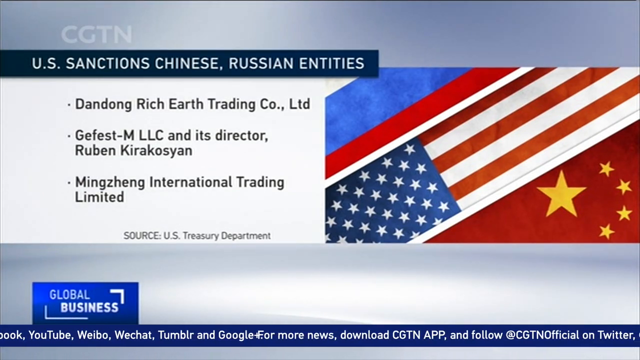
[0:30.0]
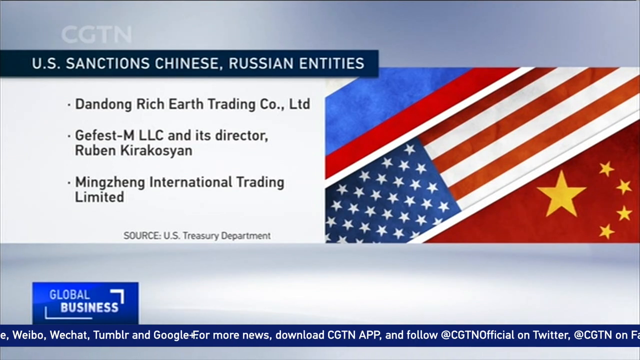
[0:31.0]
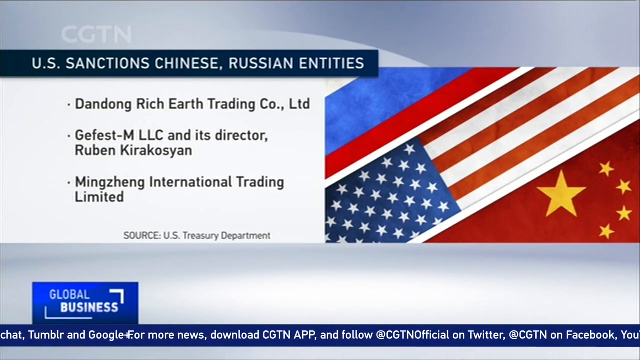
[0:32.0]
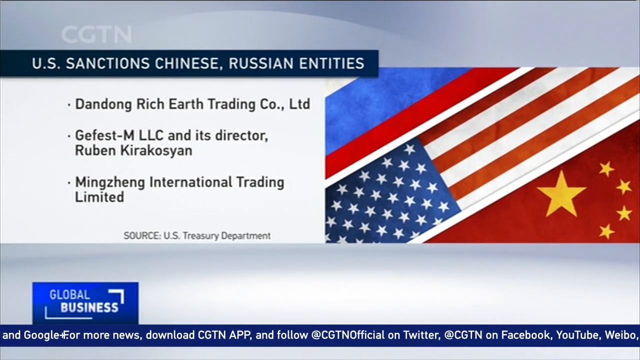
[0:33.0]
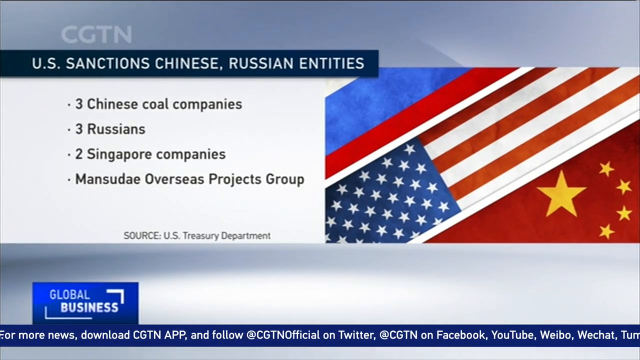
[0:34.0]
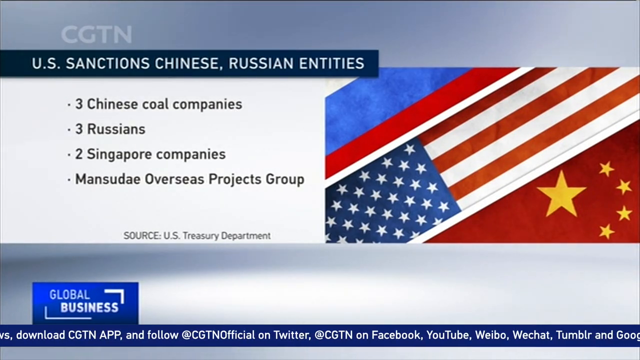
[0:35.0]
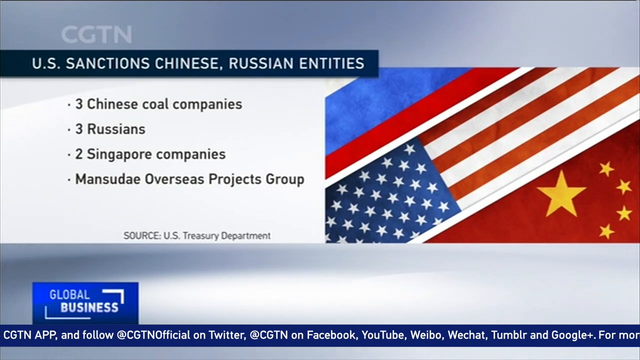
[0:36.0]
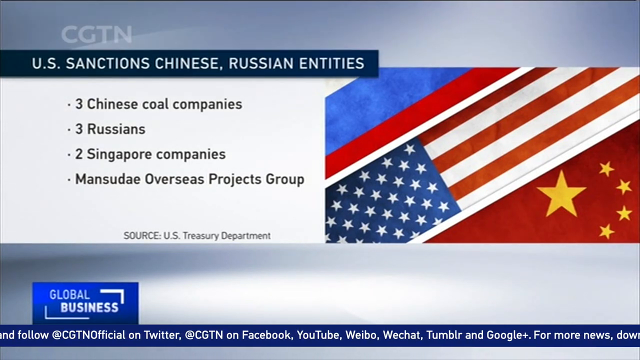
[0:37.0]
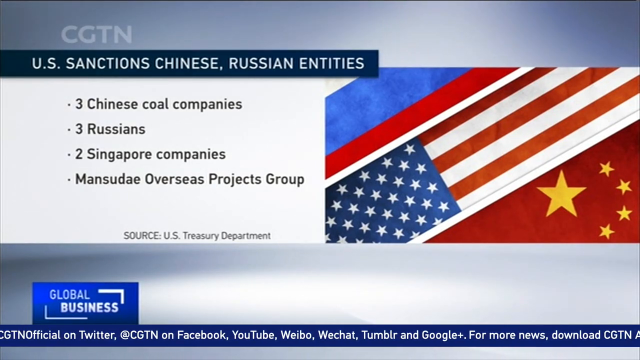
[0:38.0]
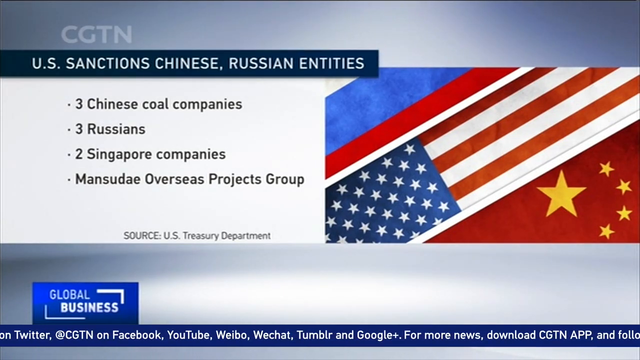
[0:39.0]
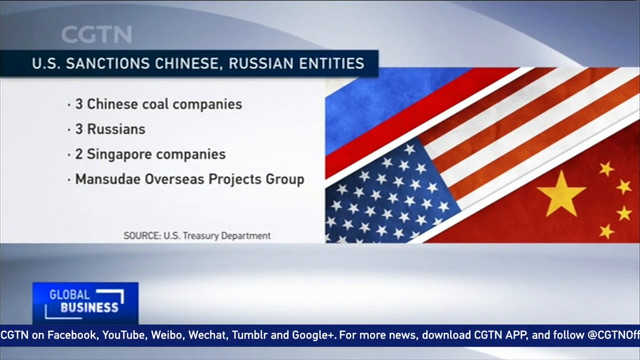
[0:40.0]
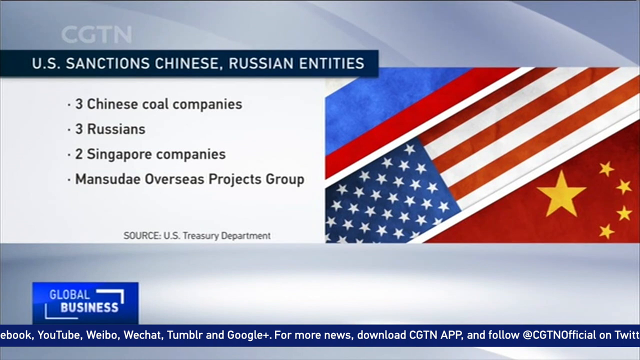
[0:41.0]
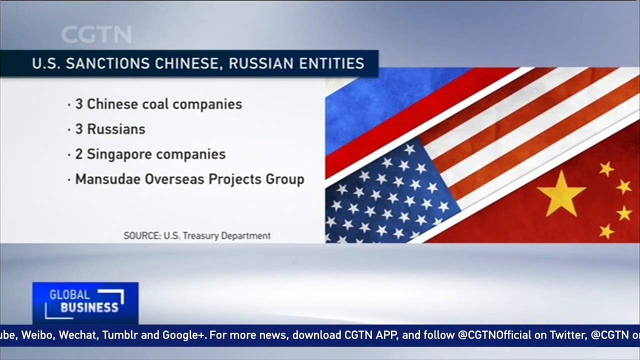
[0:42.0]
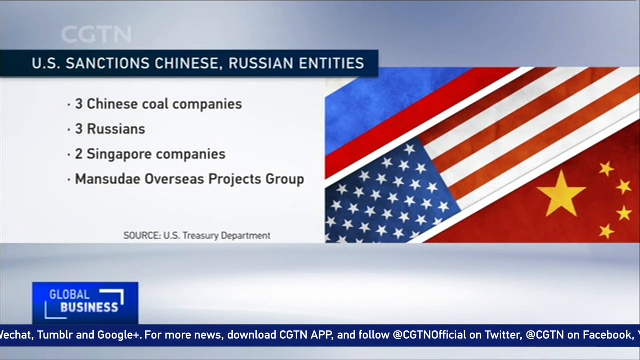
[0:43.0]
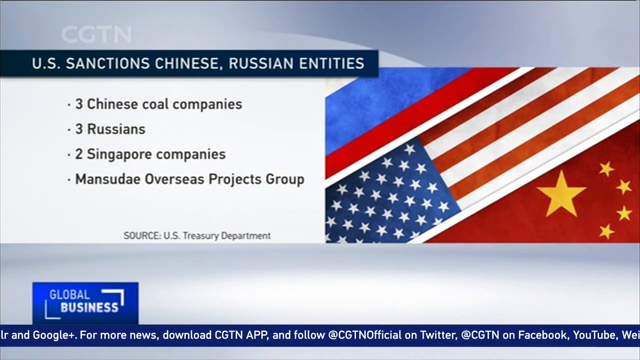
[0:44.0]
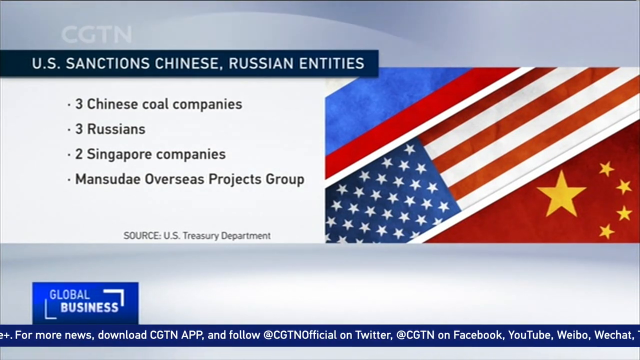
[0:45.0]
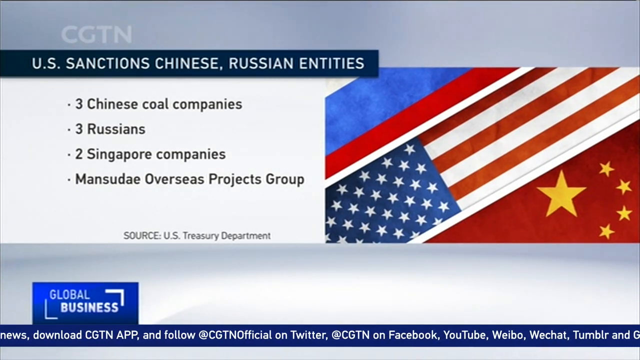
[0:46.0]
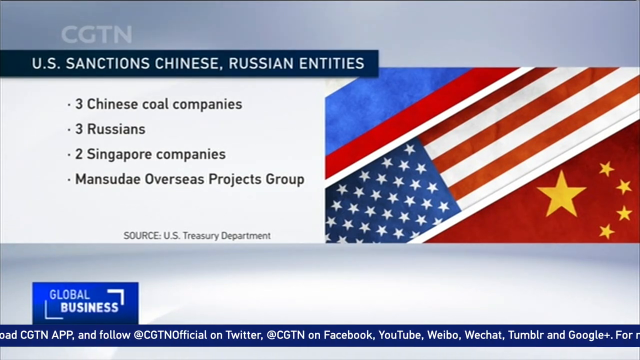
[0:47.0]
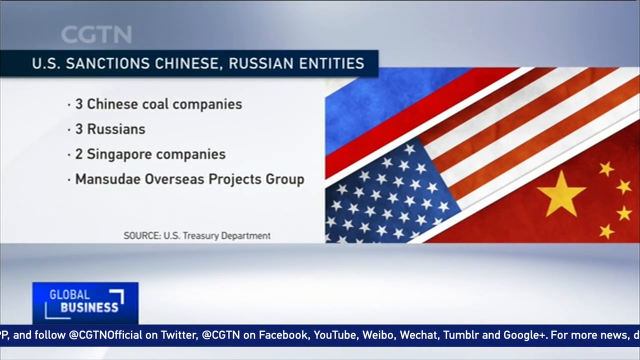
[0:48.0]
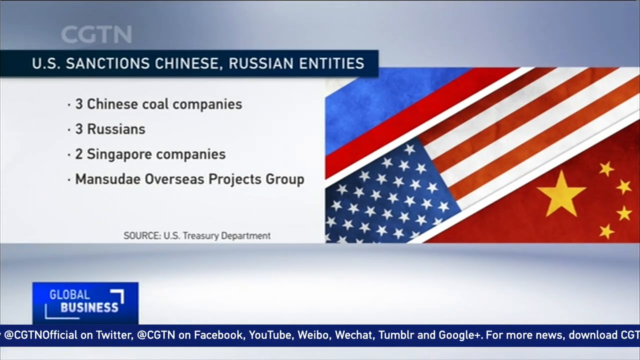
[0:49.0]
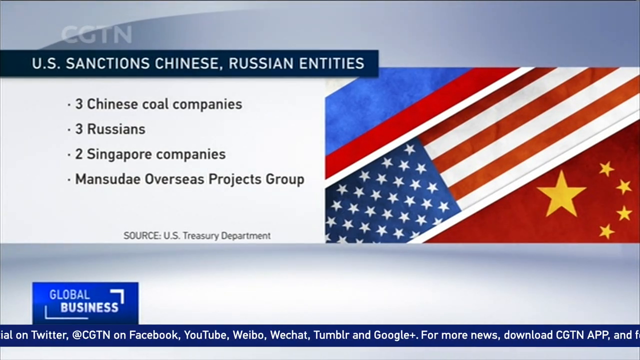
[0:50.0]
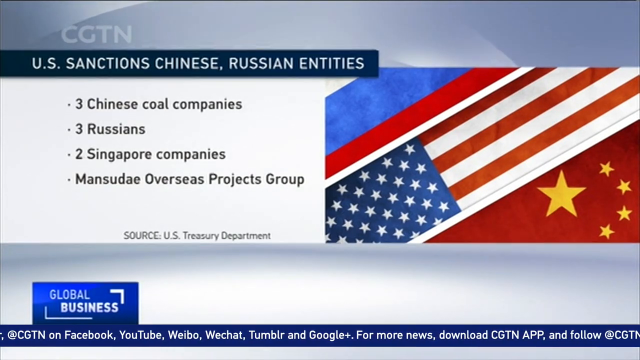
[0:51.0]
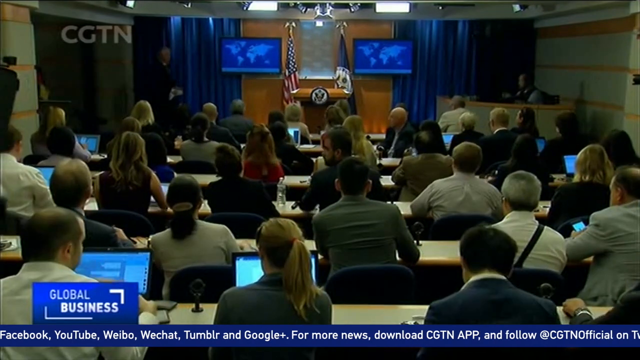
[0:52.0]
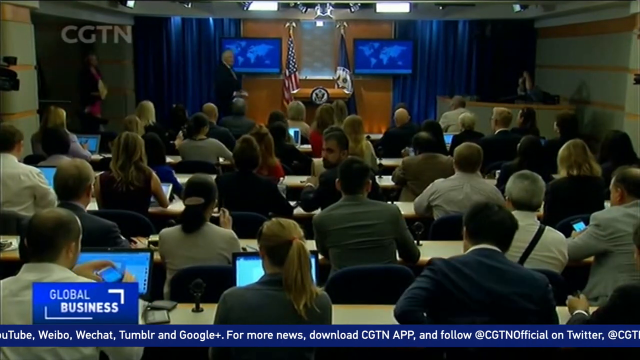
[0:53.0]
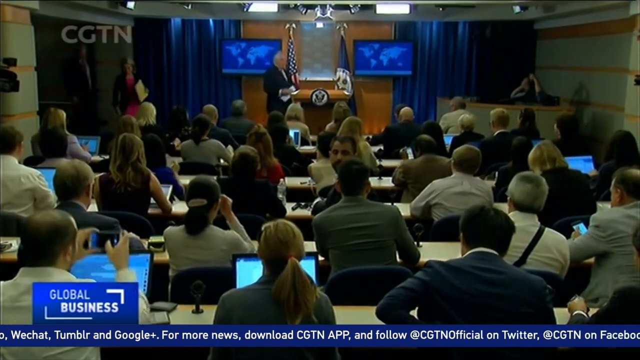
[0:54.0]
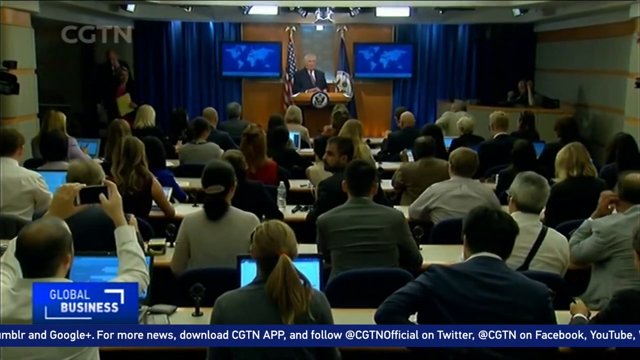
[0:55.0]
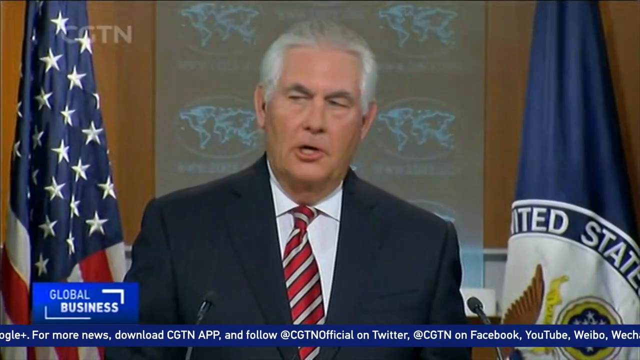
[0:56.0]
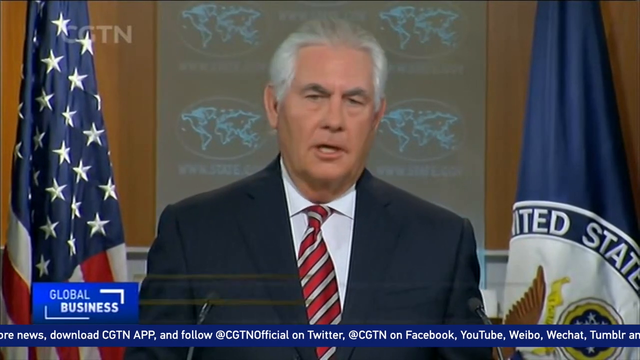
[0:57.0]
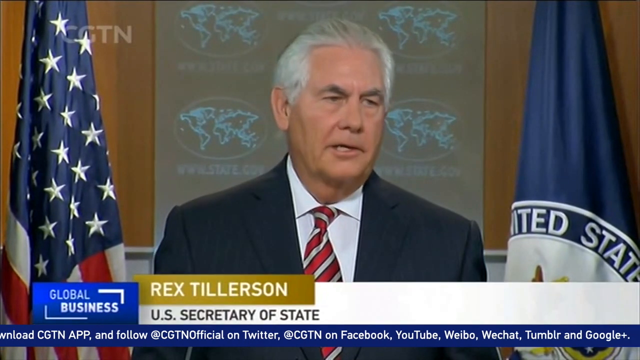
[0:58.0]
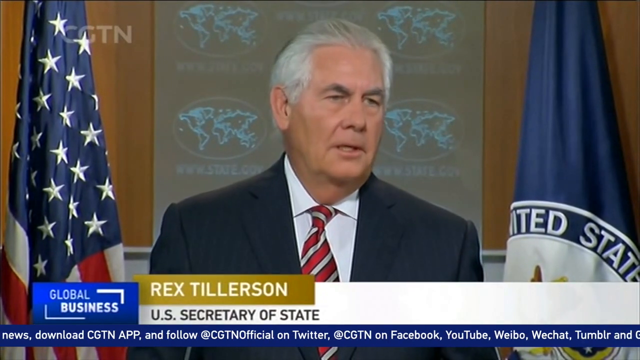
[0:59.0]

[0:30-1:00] The image of the different countries continues, with white stars on a blue background, gold stars, and red stripes. The title of the CGTN report remains "U.S. Sanctions Chinese-Russian Entities". Beneath the heading are four bullet points: "three Chinese coal companies", "three Russians", "2 Singapore companies", and "Mansudae Overseas Projects Group". The source is again the US Treasury Department. The video then cuts to what looks like a press room, where several individuals sit in chairs at desks with laptops. At the very front is a podium with two flags near it: the flag of the United States of America and a second, unidentified flag.